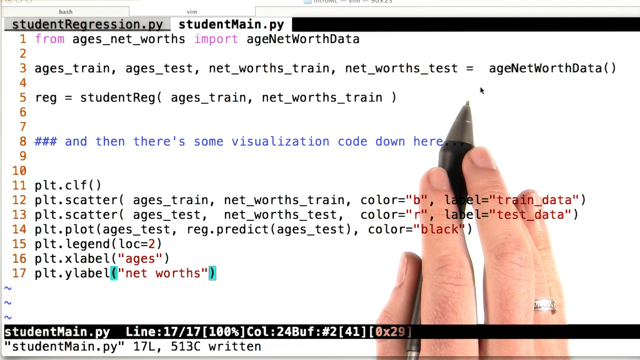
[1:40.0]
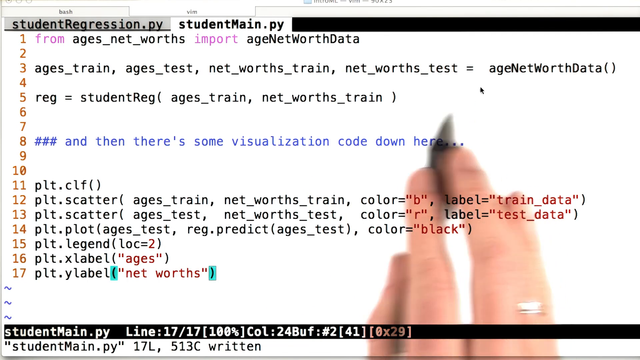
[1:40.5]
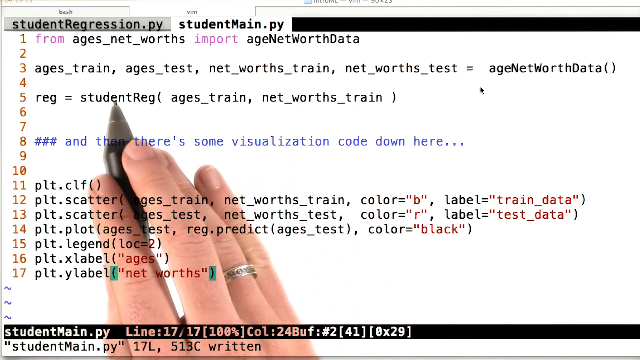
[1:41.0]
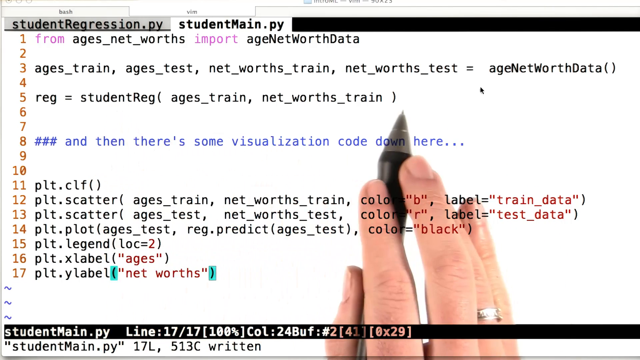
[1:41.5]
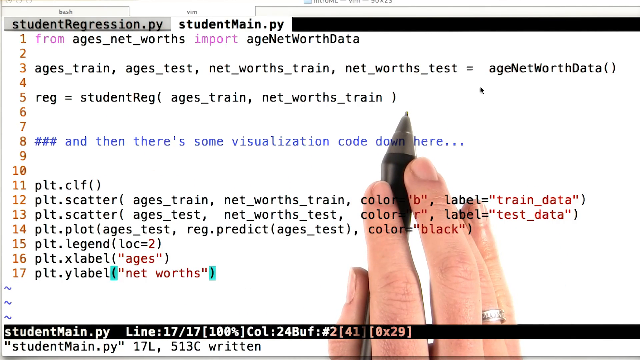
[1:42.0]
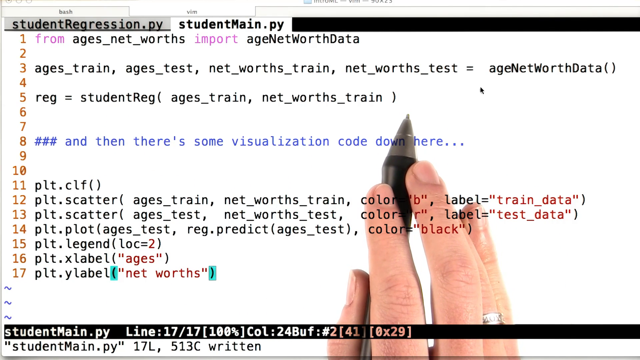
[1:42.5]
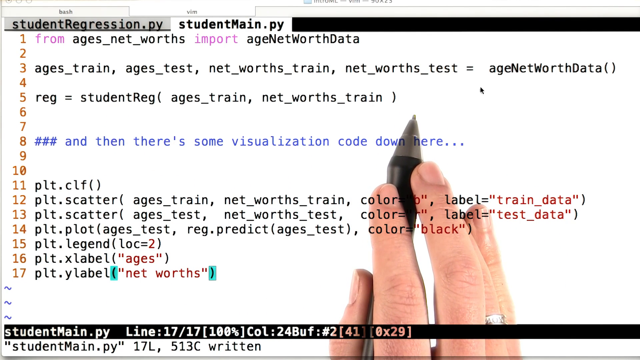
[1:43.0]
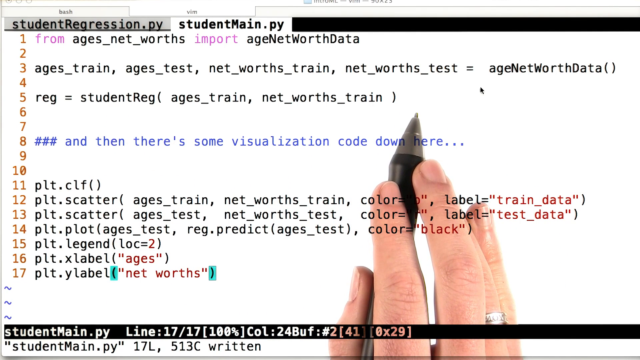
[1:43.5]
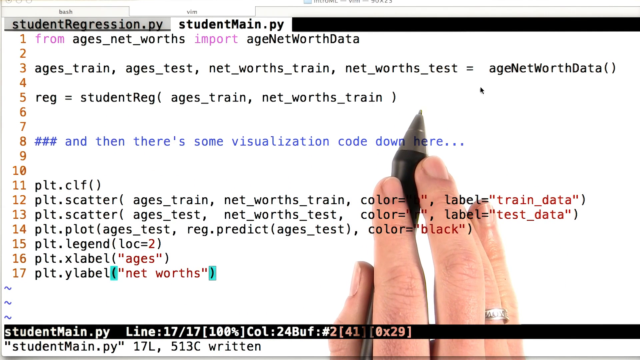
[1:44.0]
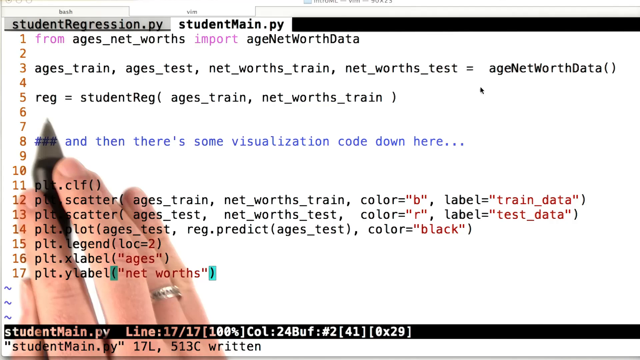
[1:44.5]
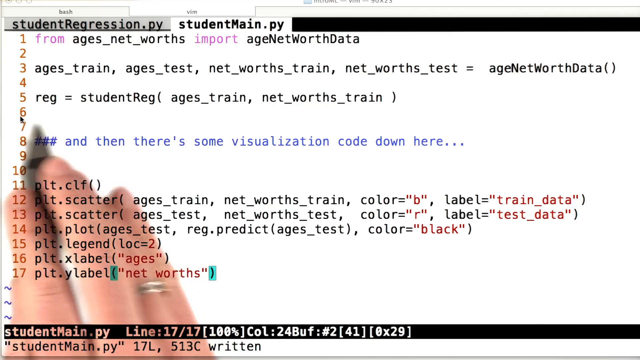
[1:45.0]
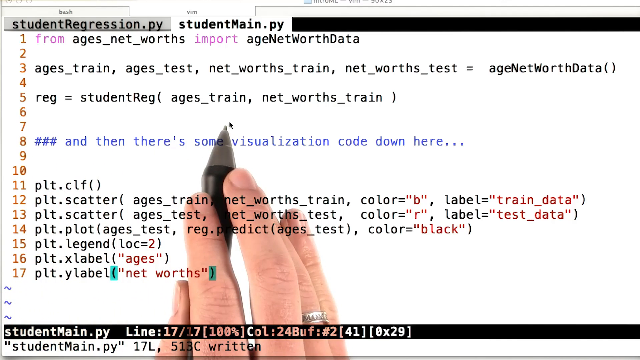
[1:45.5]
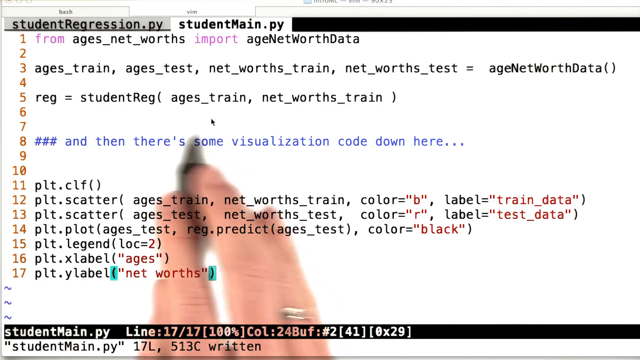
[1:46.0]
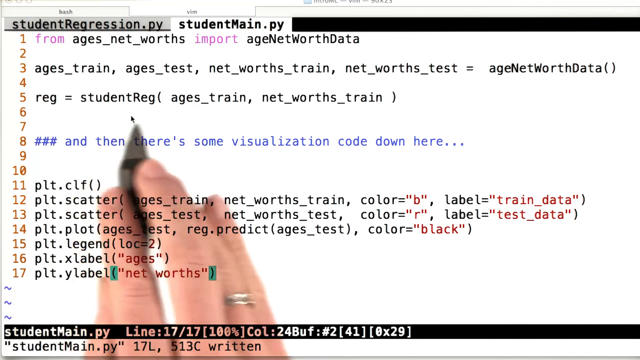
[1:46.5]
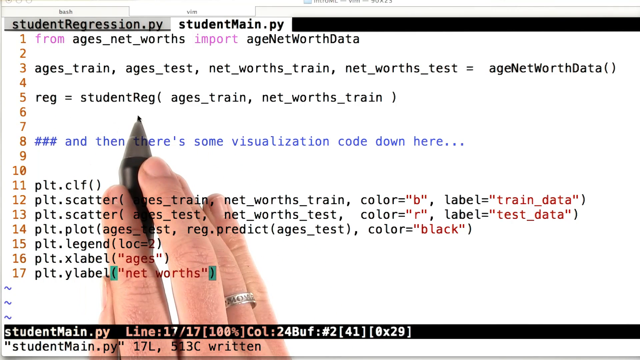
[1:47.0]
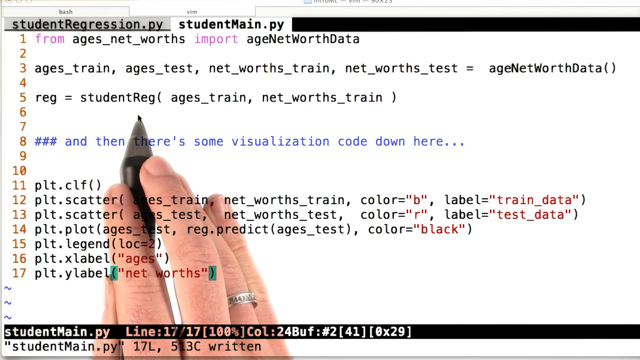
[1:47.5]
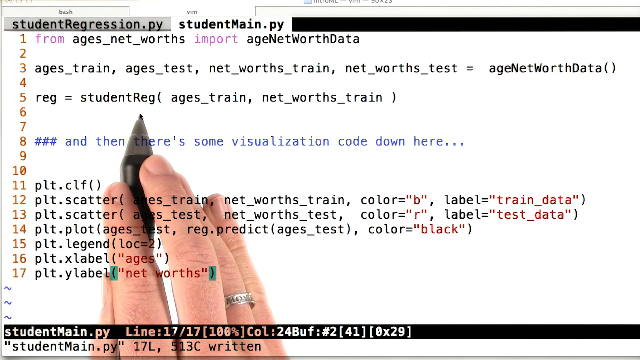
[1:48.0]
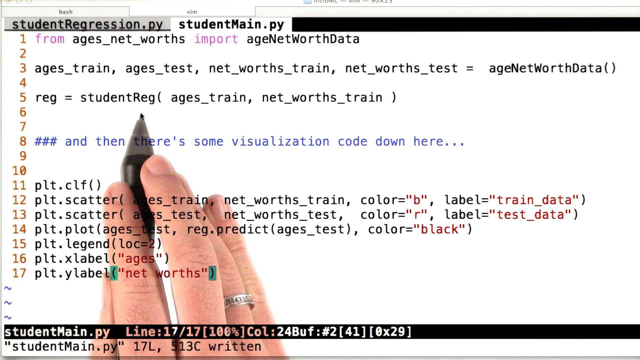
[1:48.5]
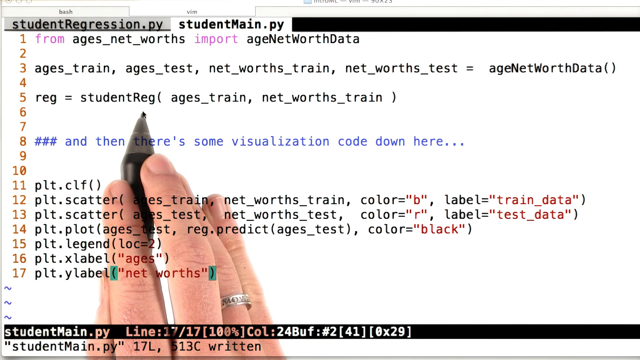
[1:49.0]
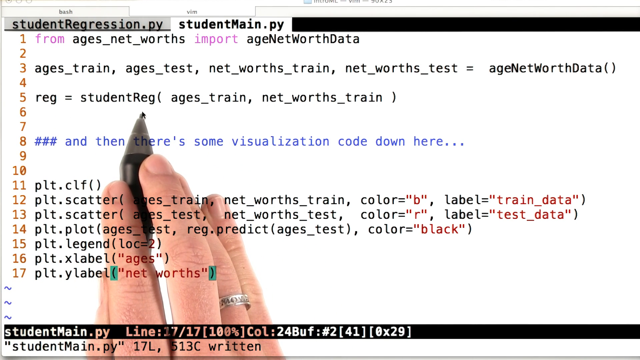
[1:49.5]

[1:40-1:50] The person goes over the code, apparently focusing on the reg variable, which is set to a student reg function that takes two variables, ages train and net worths train. Another Python file called student regression.py is visible next to student main.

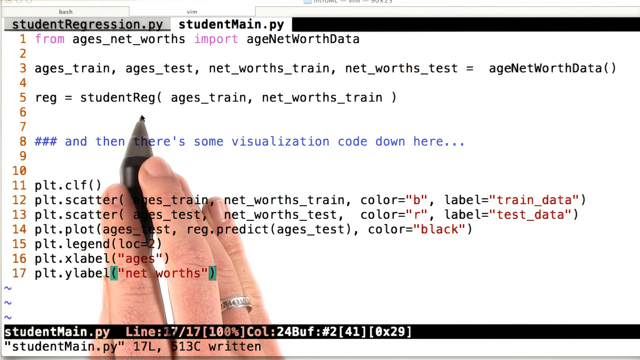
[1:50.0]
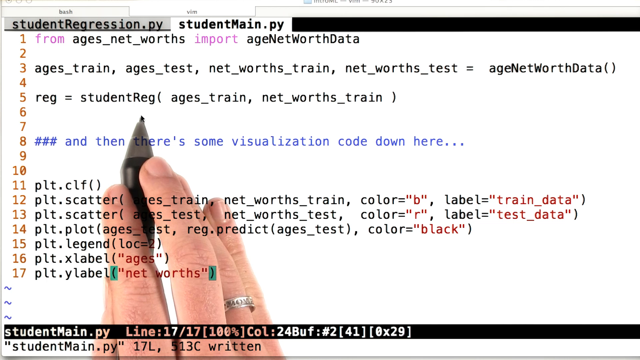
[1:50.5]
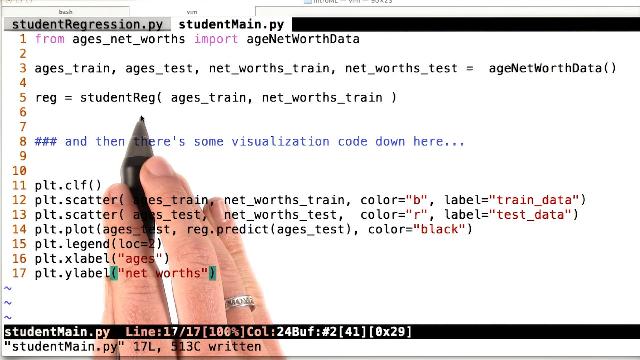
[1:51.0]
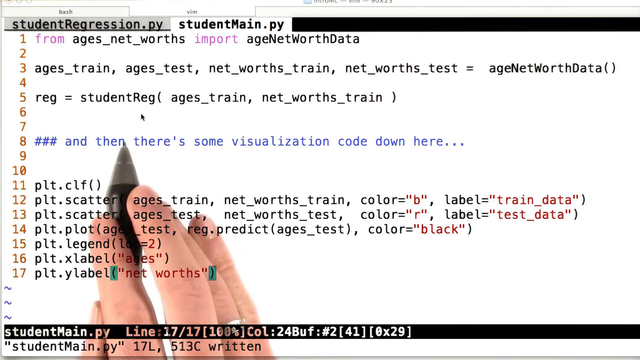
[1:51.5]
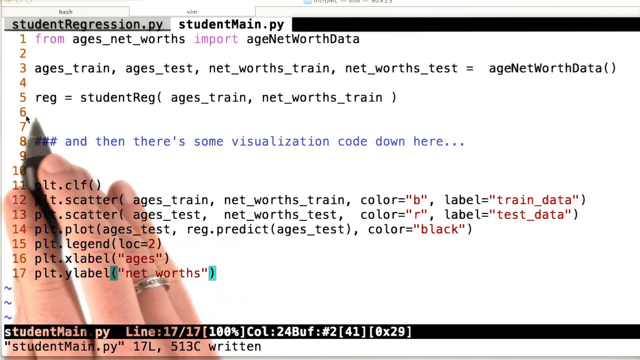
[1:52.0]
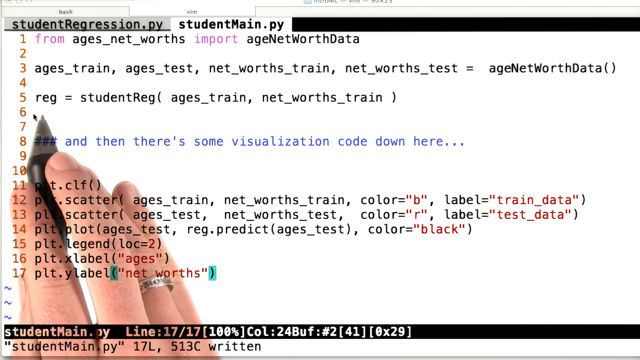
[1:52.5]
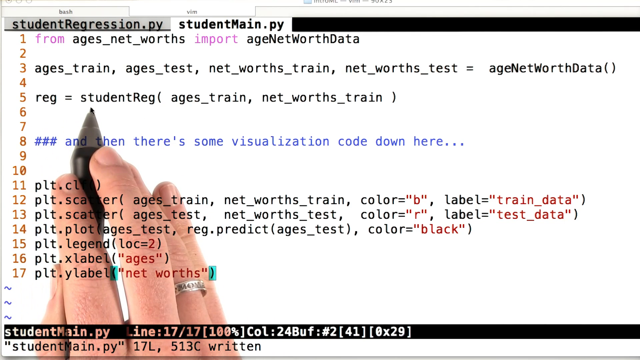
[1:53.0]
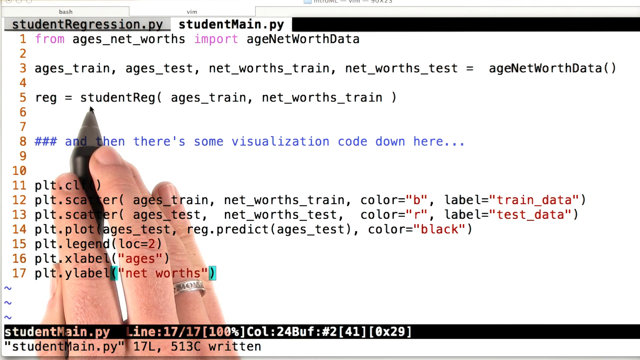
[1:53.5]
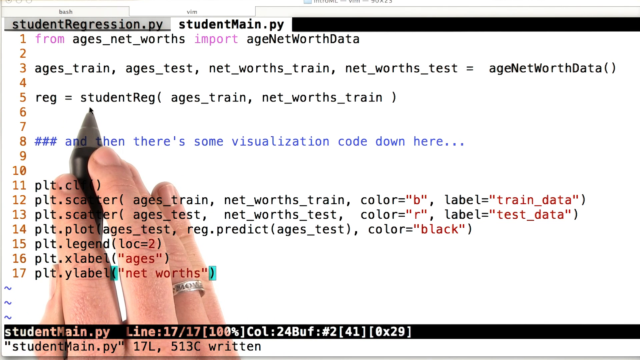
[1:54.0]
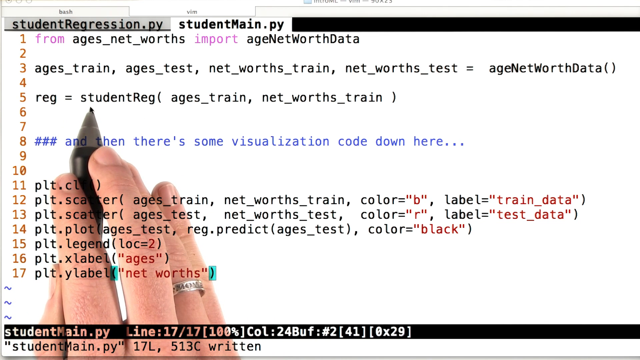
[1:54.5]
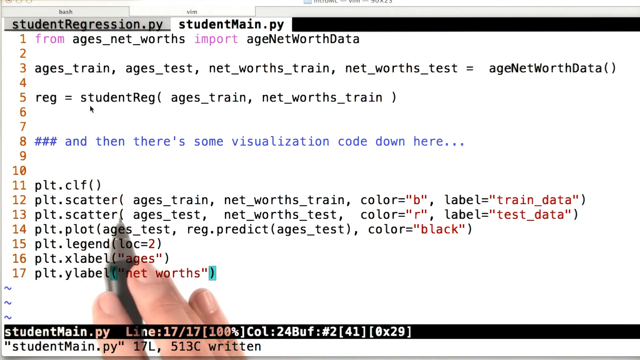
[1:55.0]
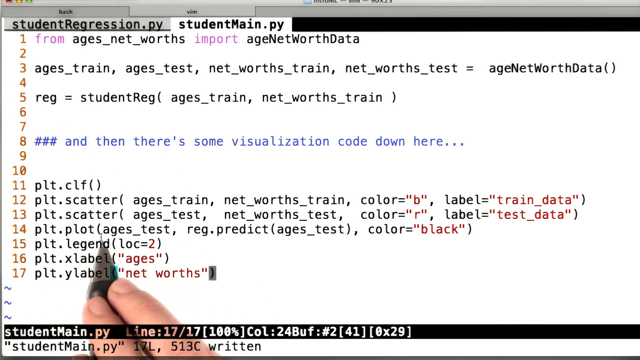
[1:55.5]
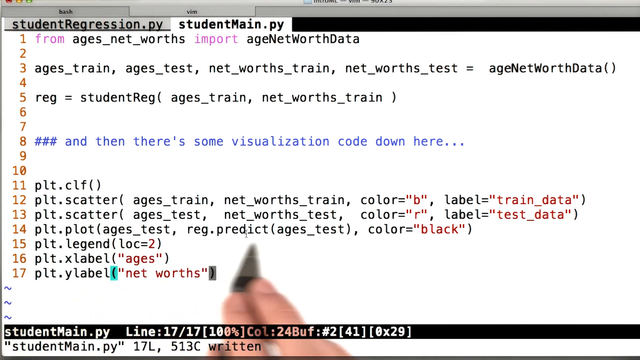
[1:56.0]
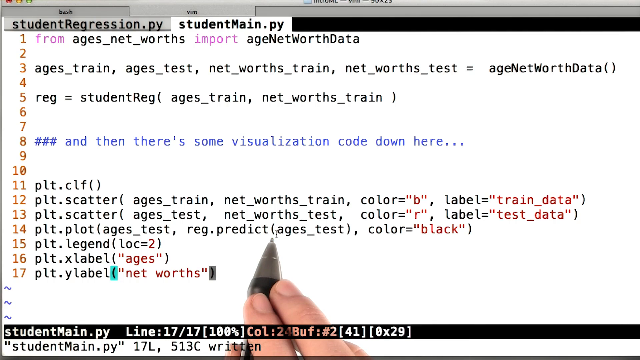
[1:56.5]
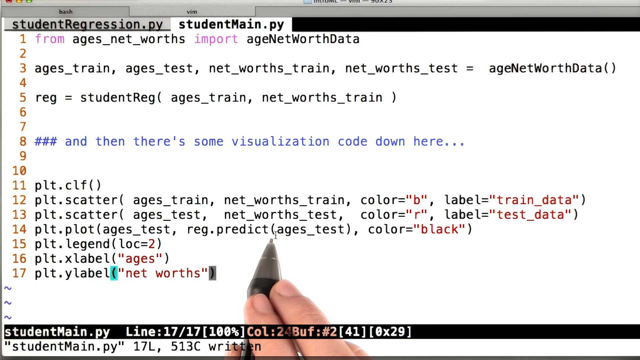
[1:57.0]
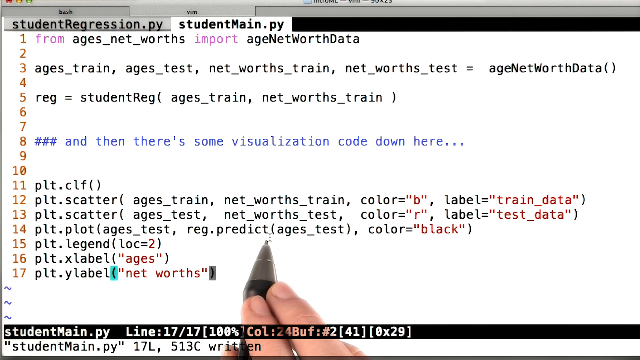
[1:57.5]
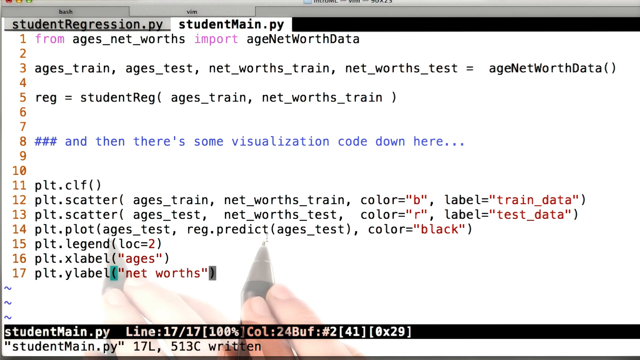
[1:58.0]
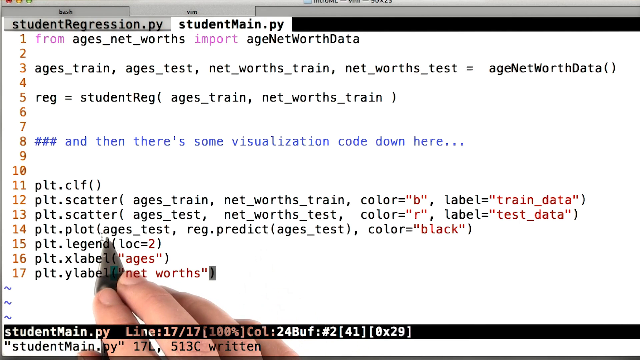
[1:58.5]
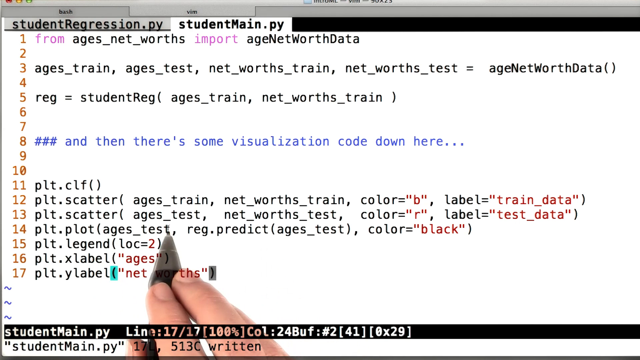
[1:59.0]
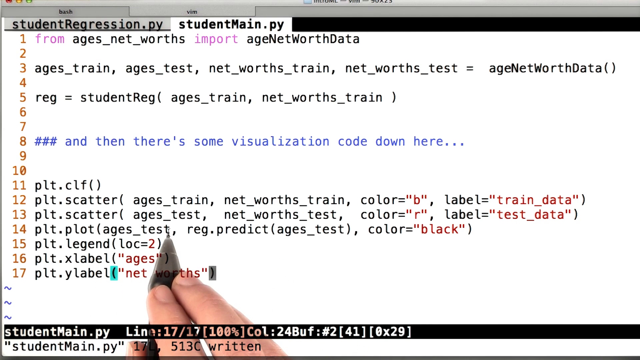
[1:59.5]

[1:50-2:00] The instructor points out the student reg function and the reg variable. Reg does not appear to be used anywhere in the scatterplot code below it. Tildes at the bottom left are highlighted in blue. The variables used in the scatterplot code are ages train, ages test, net worths test and net worths train.